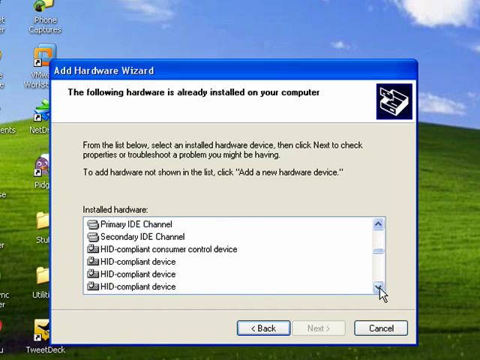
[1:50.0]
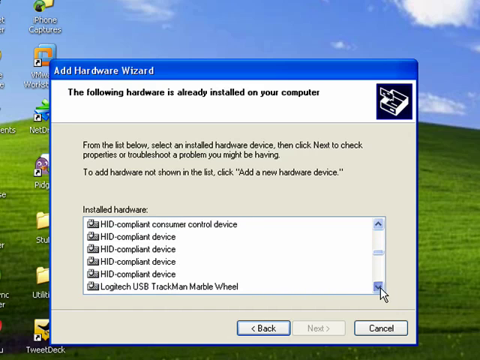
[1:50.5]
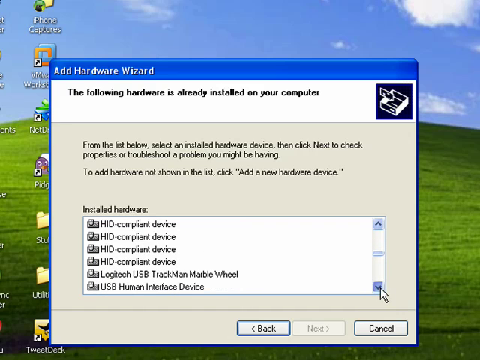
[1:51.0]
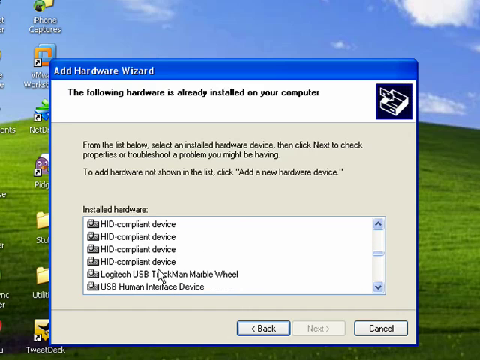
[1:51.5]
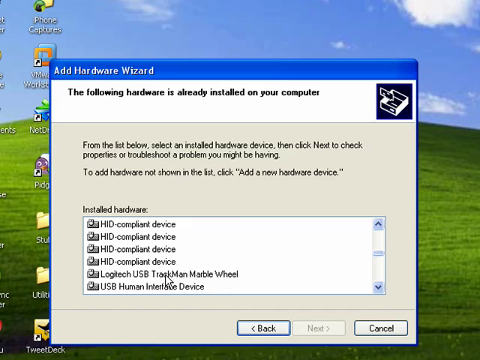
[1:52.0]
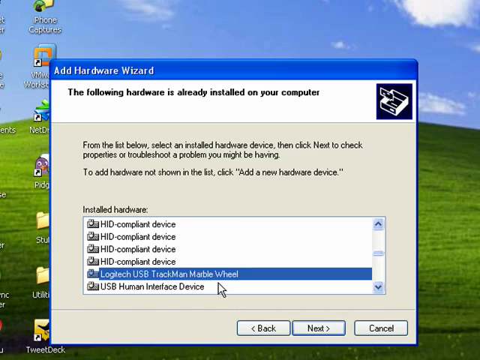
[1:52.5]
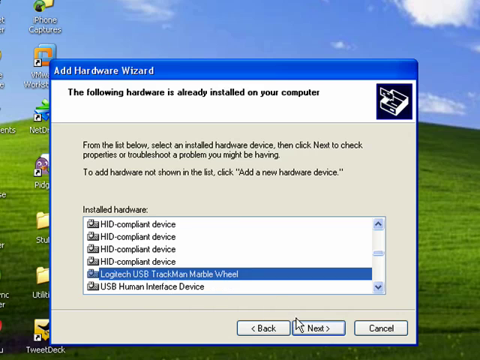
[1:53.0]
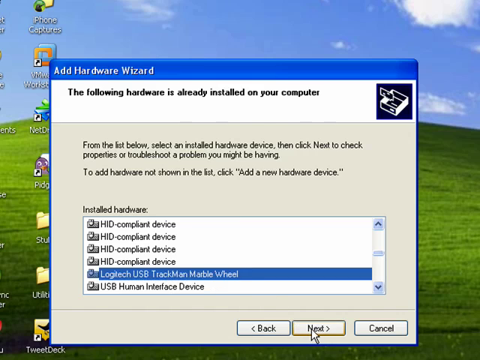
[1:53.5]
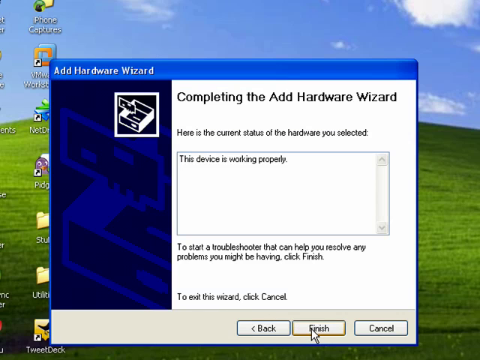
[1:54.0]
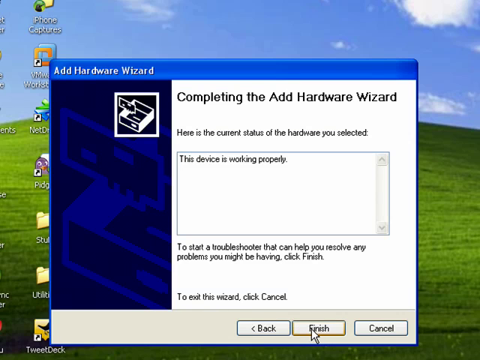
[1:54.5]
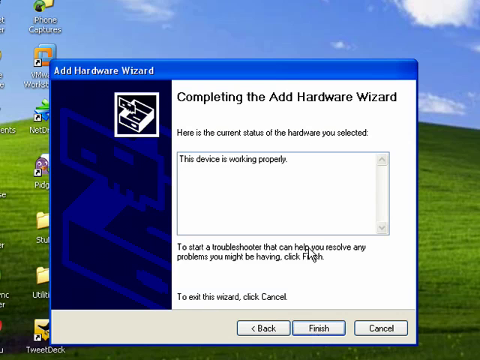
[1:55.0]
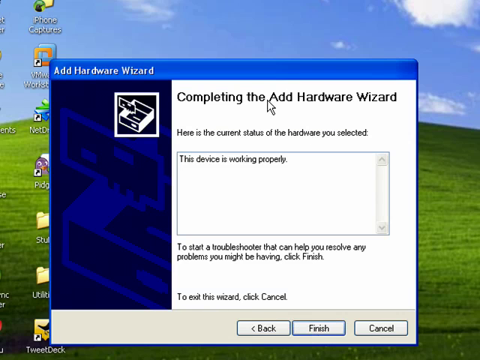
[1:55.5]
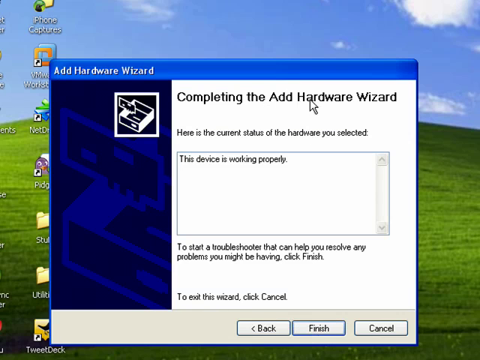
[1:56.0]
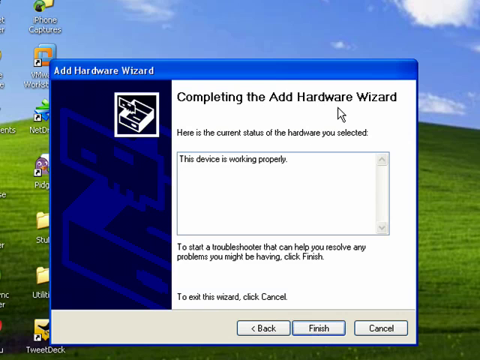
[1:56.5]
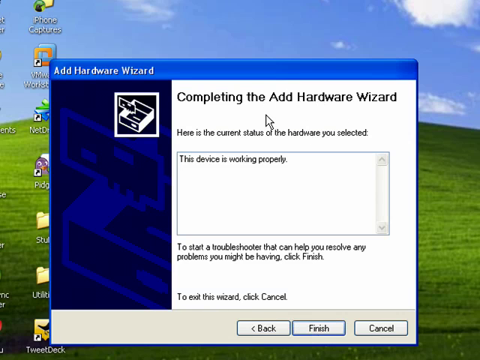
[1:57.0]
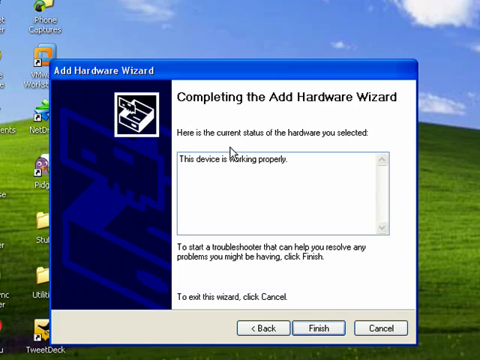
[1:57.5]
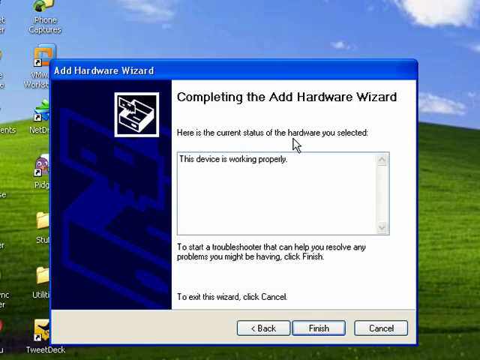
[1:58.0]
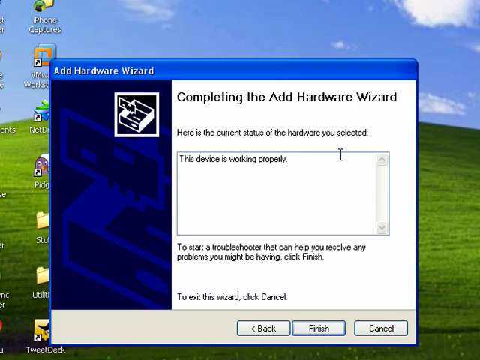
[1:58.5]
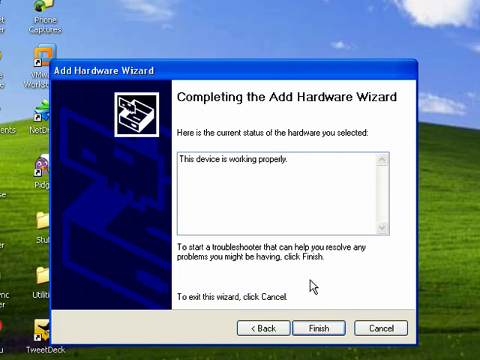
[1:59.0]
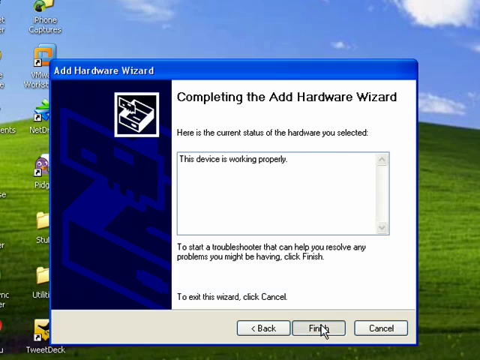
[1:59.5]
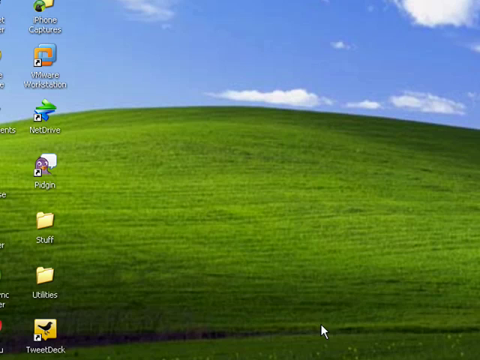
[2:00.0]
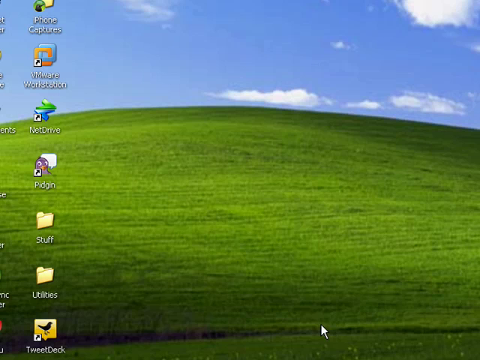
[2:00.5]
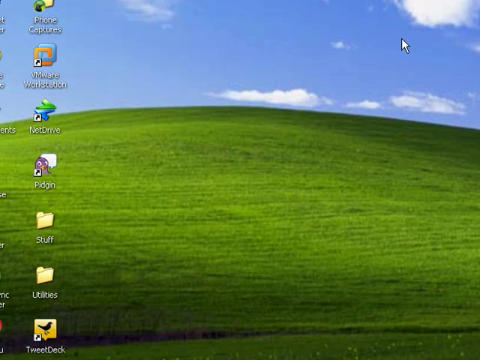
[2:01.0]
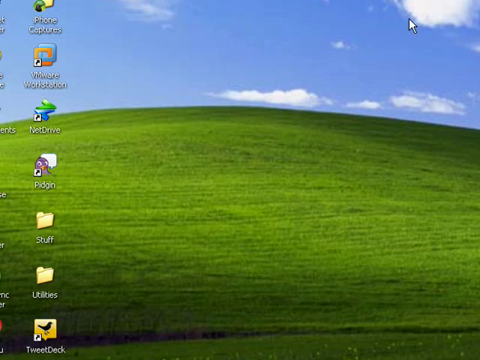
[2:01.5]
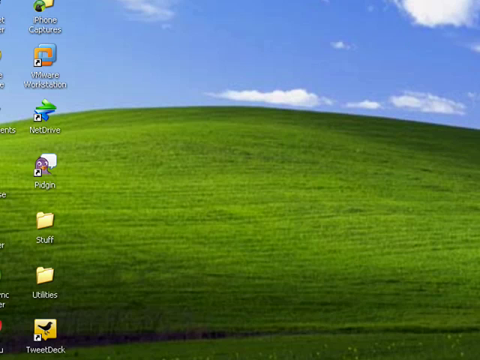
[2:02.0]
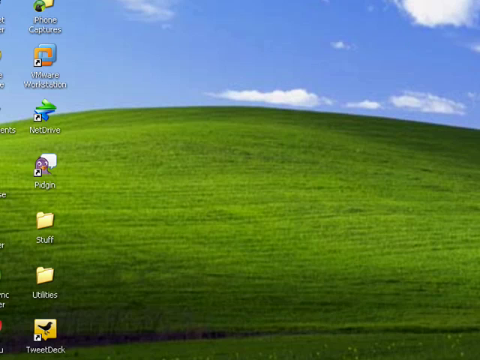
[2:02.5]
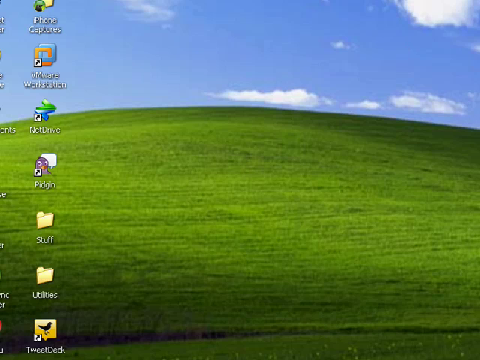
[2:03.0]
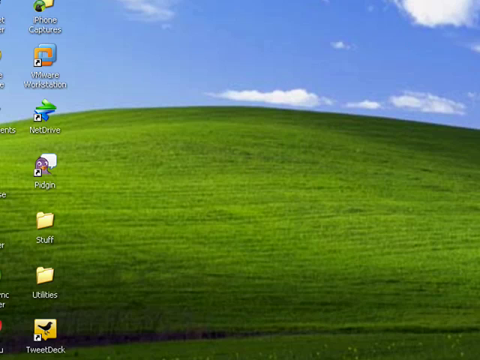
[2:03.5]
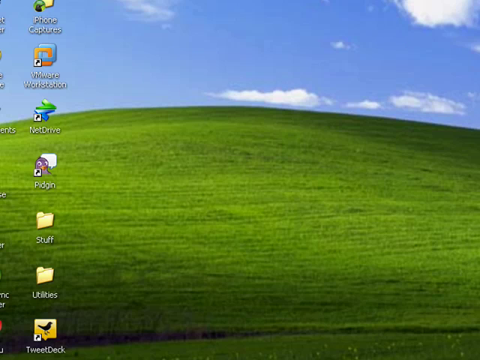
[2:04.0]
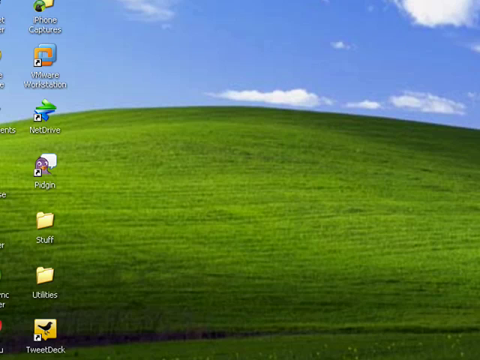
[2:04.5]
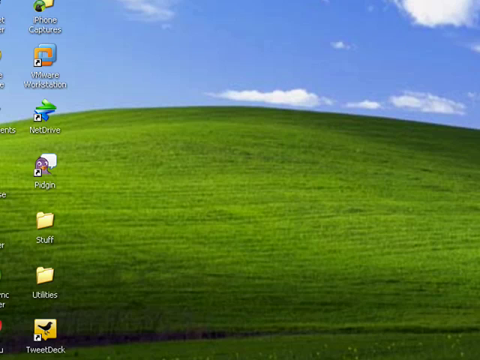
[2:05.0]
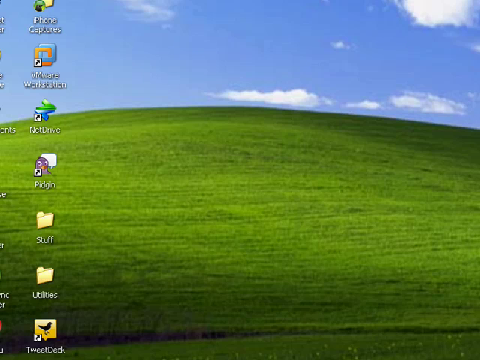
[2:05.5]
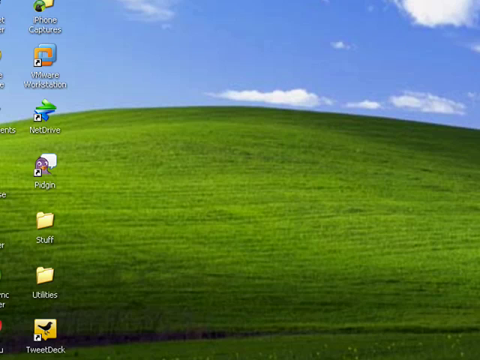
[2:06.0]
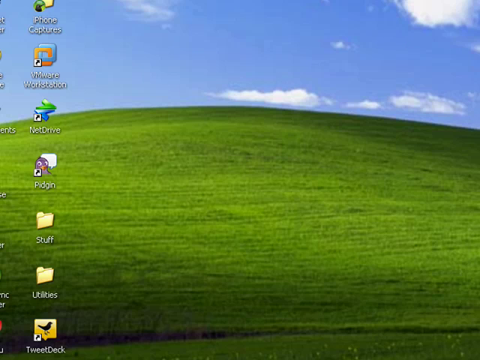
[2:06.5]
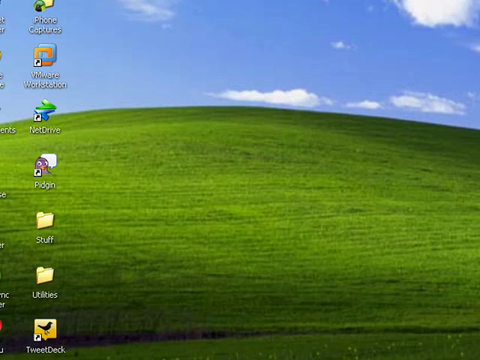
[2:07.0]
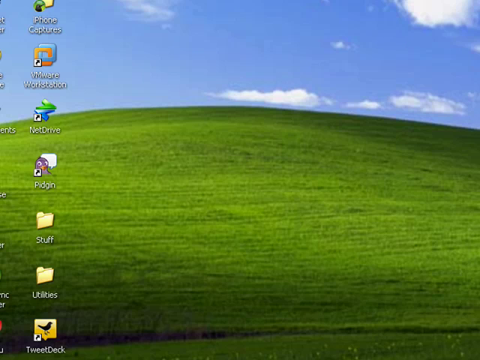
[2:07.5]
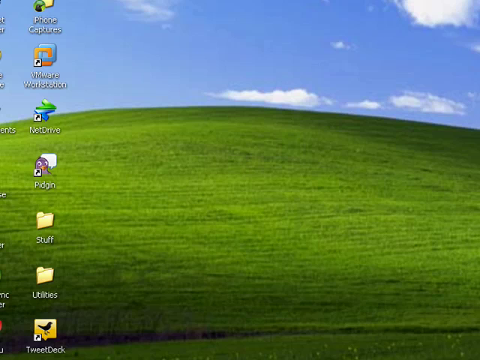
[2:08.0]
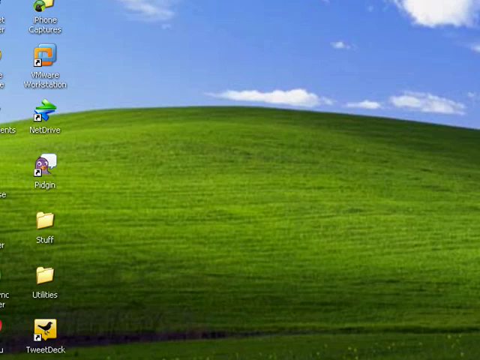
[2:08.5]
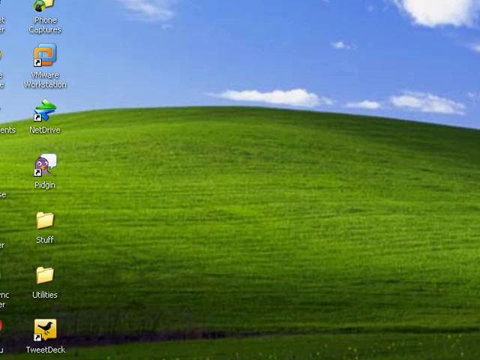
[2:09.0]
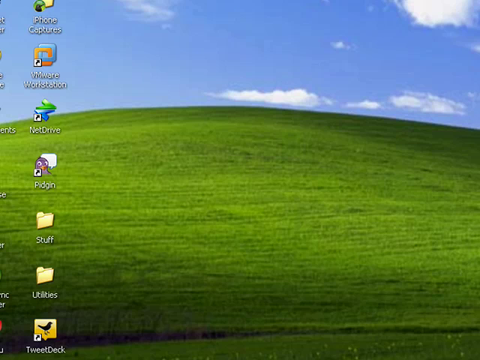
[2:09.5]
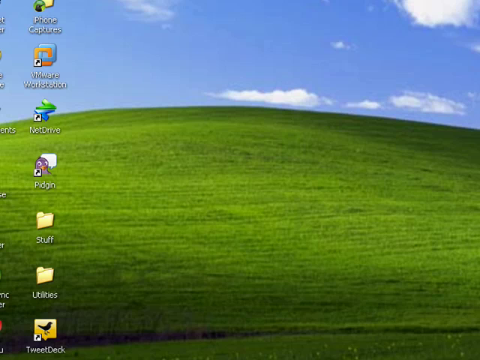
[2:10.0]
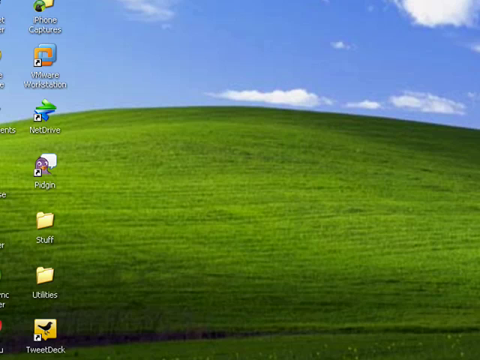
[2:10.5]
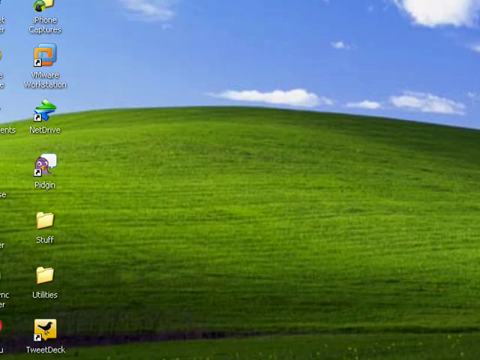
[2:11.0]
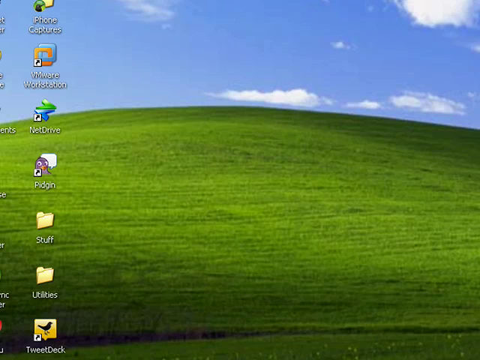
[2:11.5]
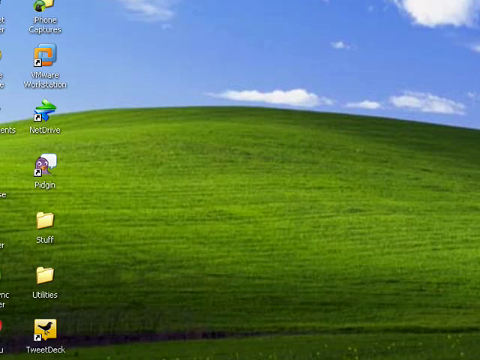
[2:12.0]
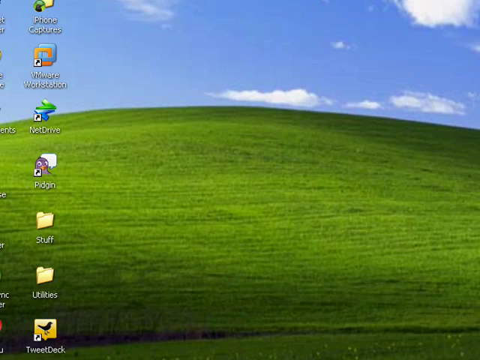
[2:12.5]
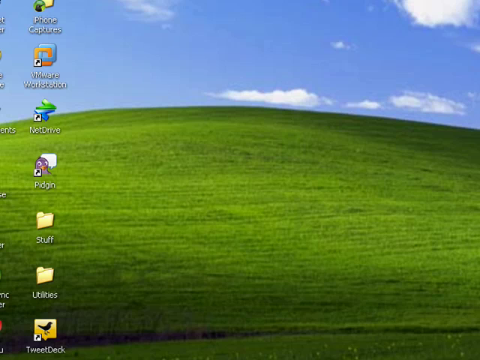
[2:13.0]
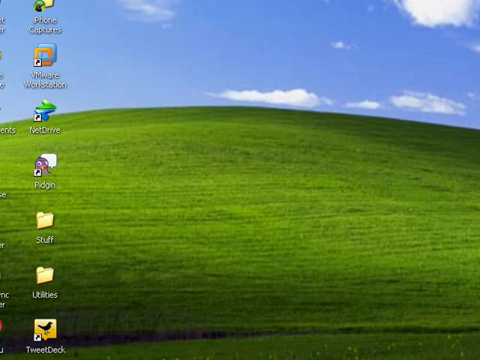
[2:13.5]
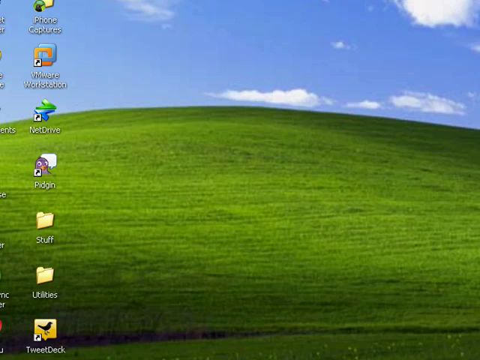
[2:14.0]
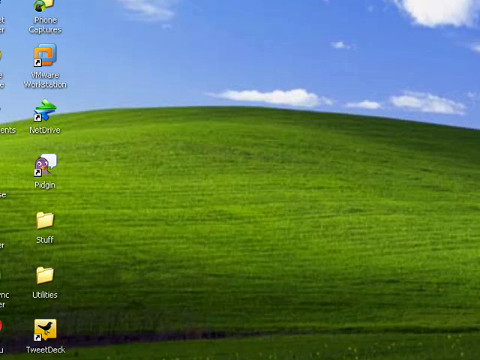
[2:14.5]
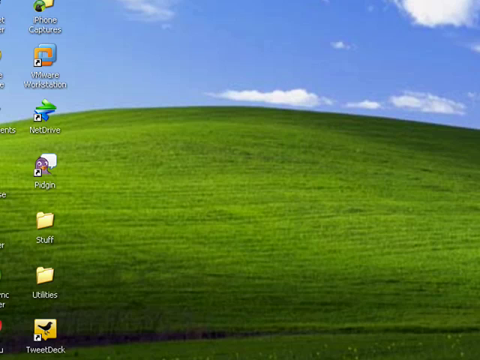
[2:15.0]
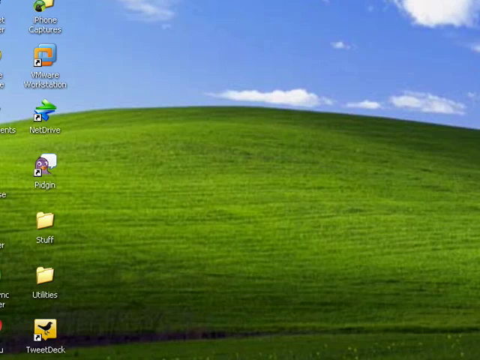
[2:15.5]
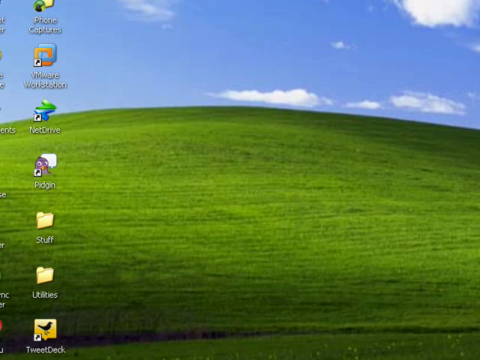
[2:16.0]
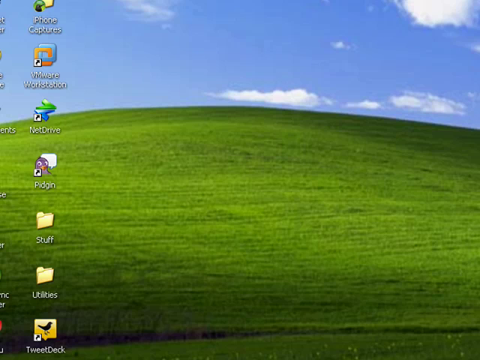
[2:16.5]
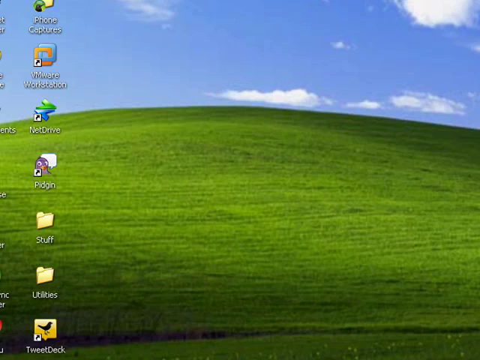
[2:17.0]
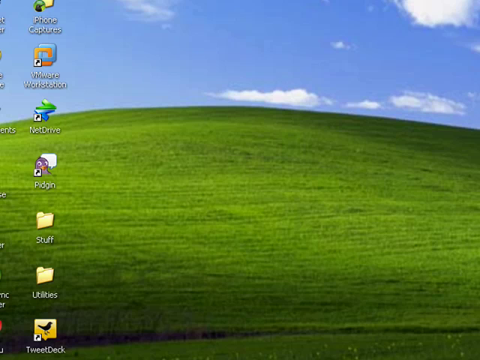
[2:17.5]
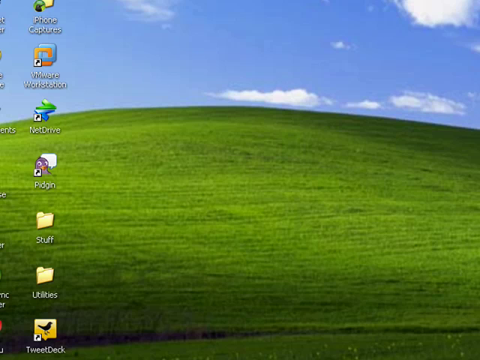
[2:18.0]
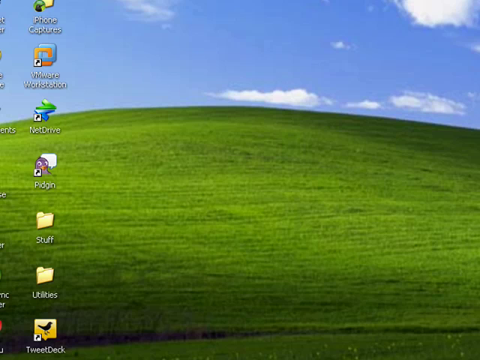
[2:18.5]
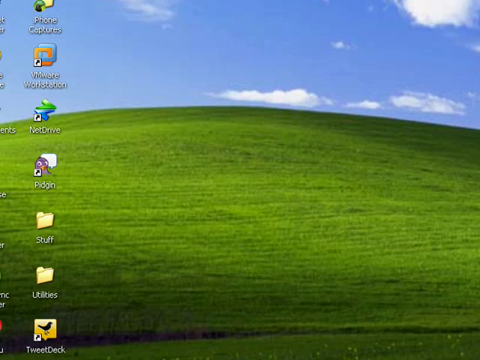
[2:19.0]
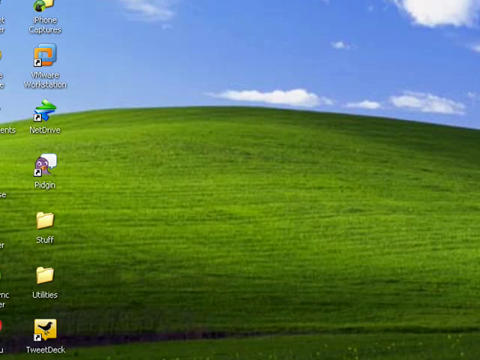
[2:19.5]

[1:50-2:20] A computer page has a big green hill as a backdrop and a blue sky with puffy clouds. A pop-up titled "add hardware wizard" reads "the following hardware is already installed on your computer. From the list below select and install hardware device then click next to check properties to troubleshoot a problem you might be having." It also says that to add hardware not shown on the list, you click "add new hardware device." Someone with the cursor looks through the list, finds what they want and highlights it. Text then reads "completing the add hardware wizard," and they point to it with the cursor; there is a little box inside. It looks like they have successfully added the hardware, as the pop-up leaves, leaving just one row of icons on the screen, the green hill with darker shadings of green and the blue sky. Then a pop-up appears saying "the following hardware is already installed on your computer," and the sequence repeats.